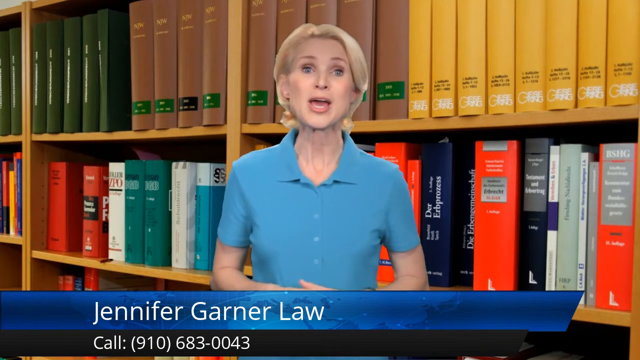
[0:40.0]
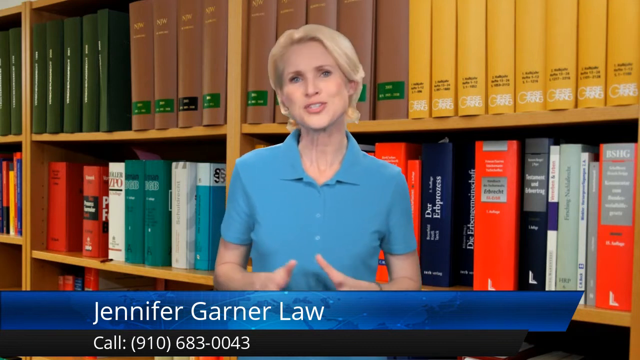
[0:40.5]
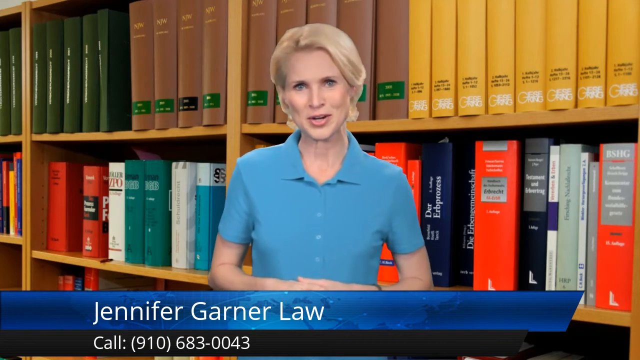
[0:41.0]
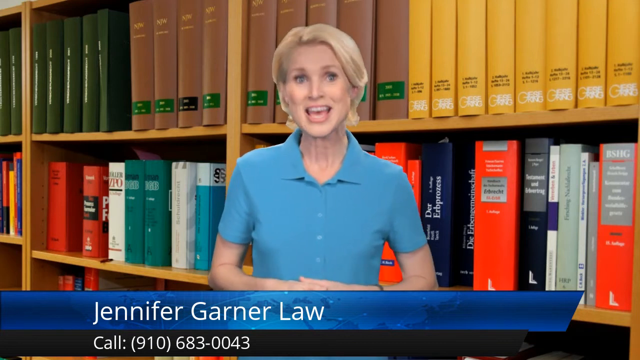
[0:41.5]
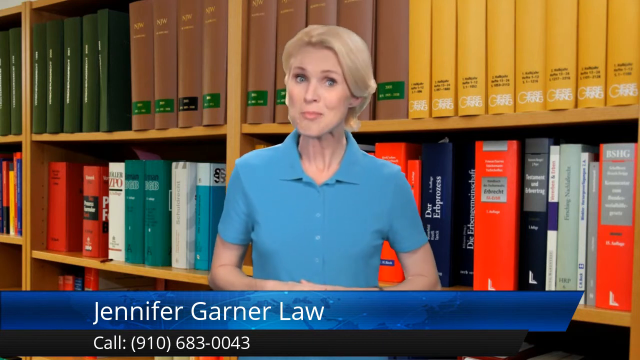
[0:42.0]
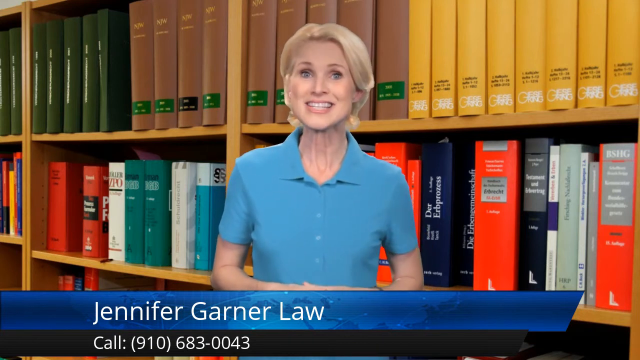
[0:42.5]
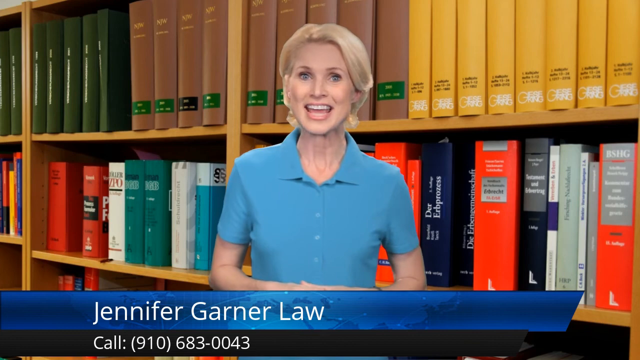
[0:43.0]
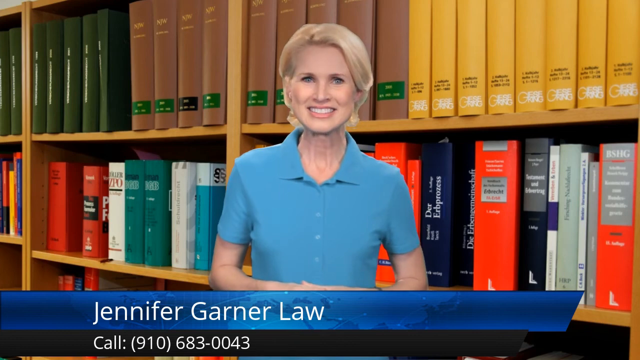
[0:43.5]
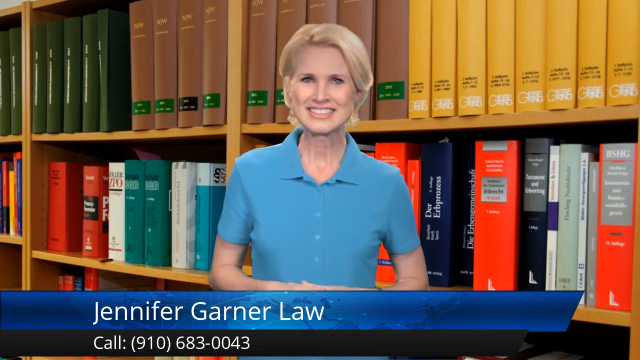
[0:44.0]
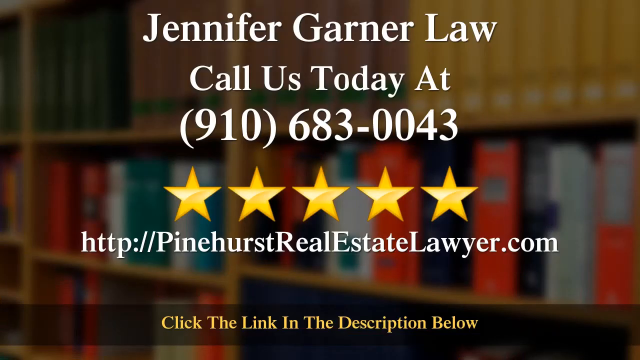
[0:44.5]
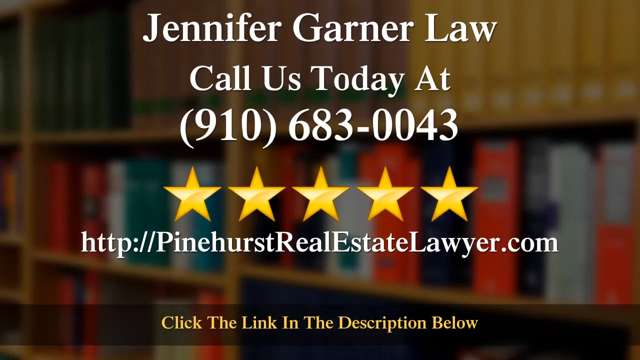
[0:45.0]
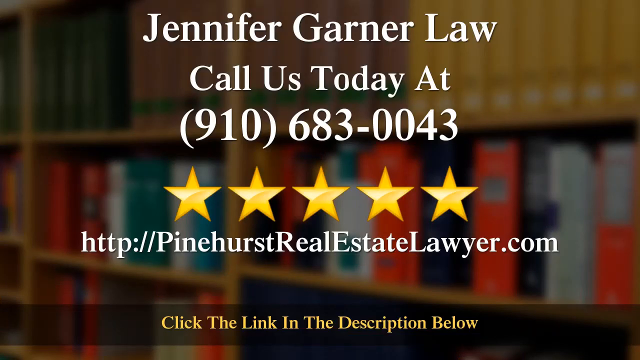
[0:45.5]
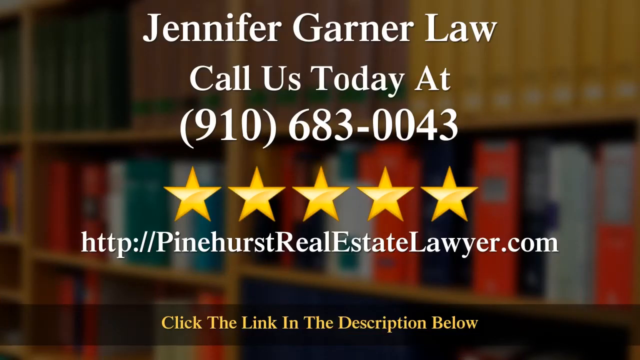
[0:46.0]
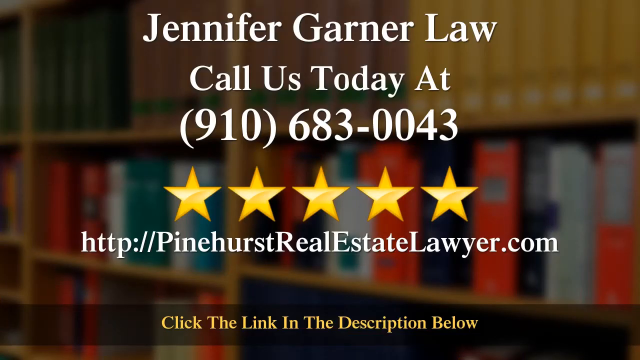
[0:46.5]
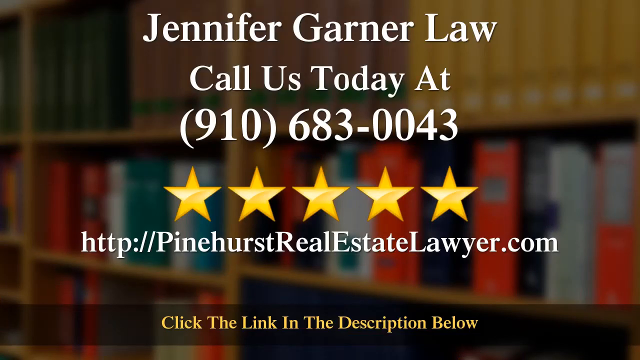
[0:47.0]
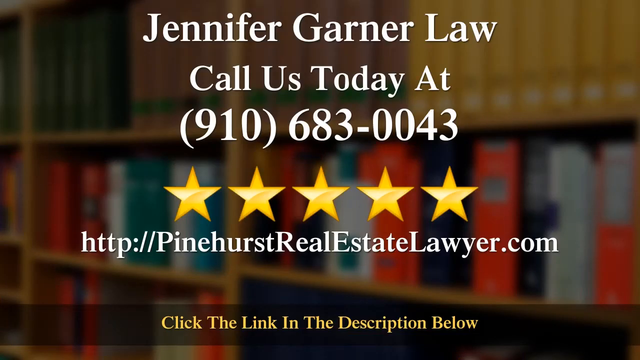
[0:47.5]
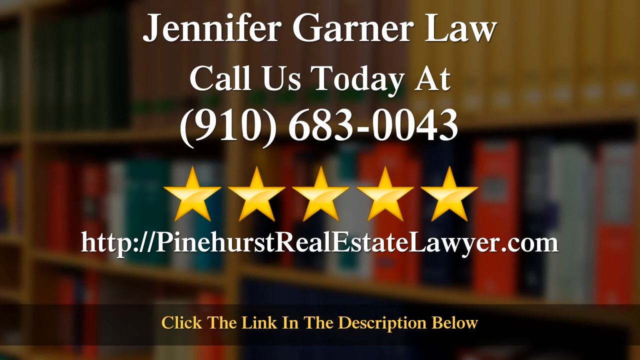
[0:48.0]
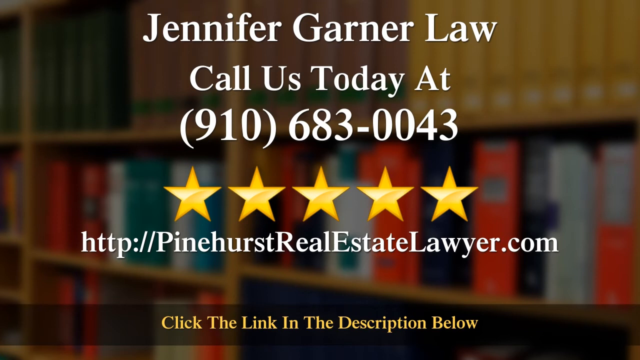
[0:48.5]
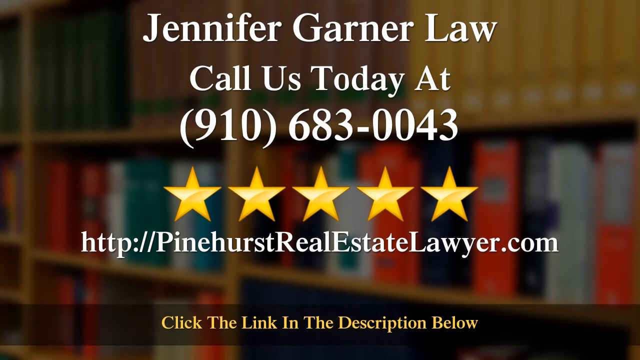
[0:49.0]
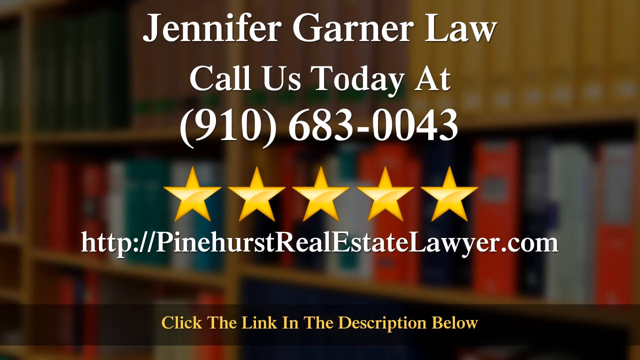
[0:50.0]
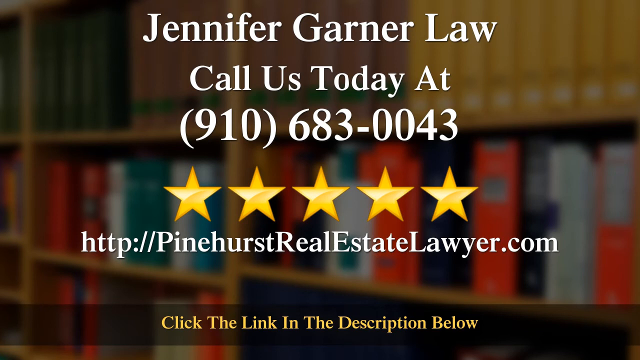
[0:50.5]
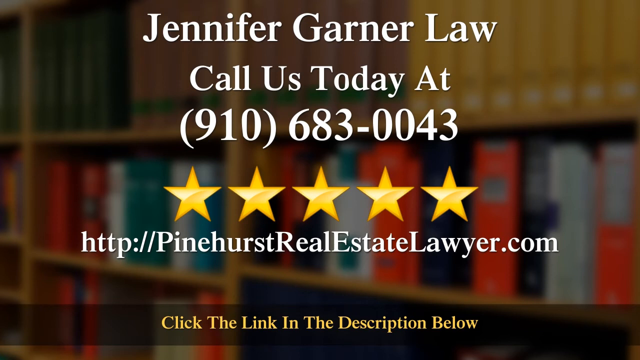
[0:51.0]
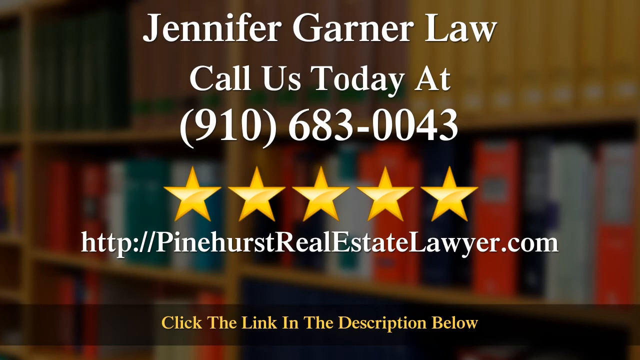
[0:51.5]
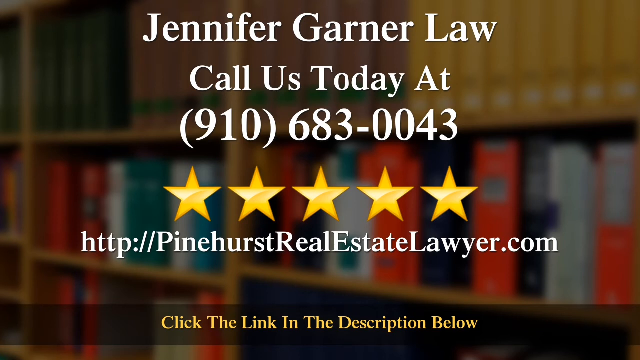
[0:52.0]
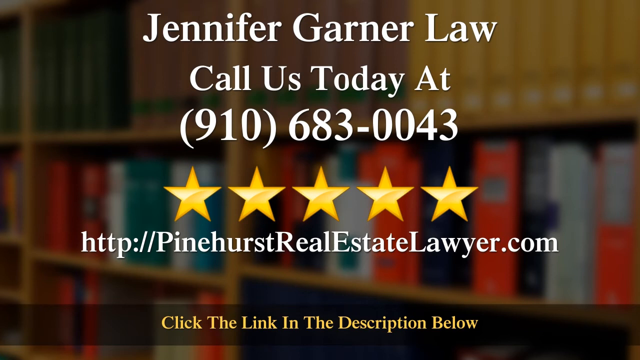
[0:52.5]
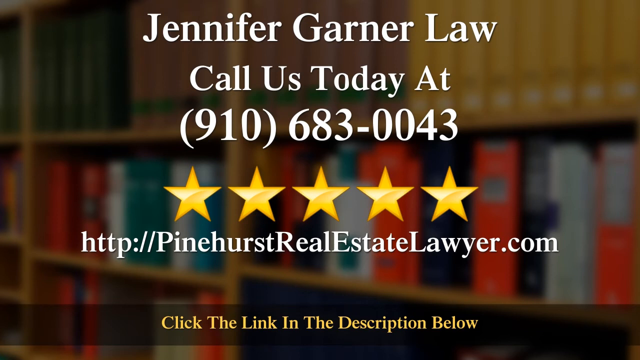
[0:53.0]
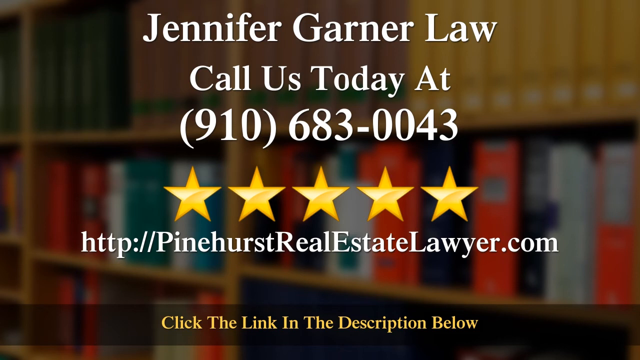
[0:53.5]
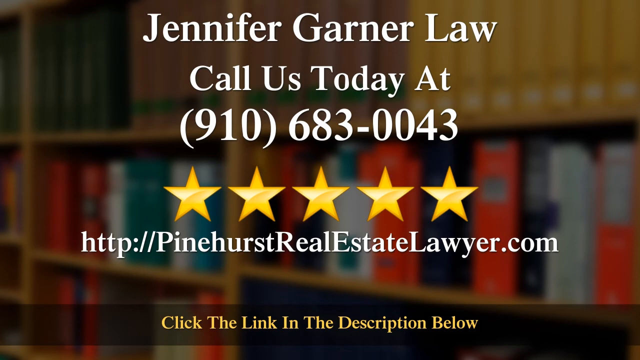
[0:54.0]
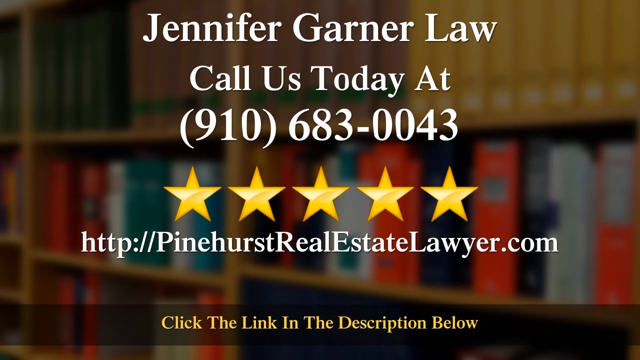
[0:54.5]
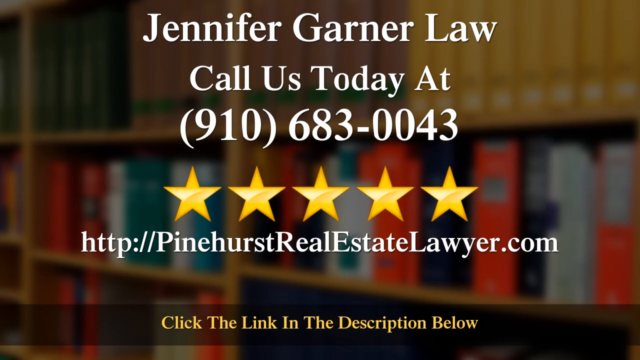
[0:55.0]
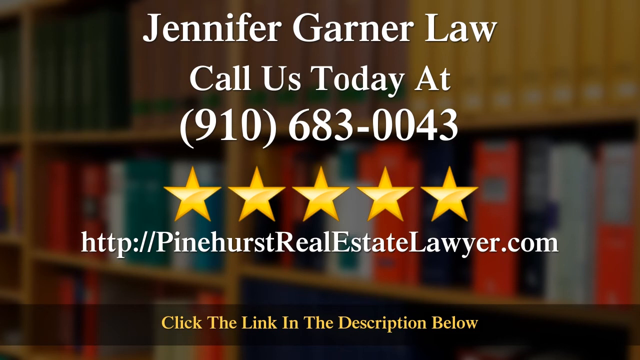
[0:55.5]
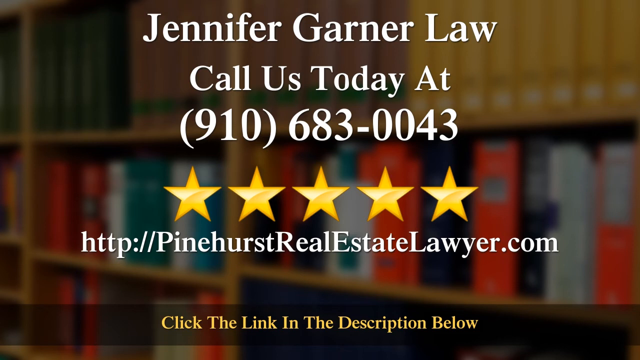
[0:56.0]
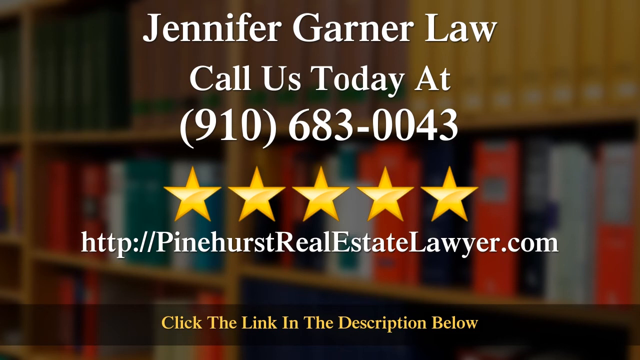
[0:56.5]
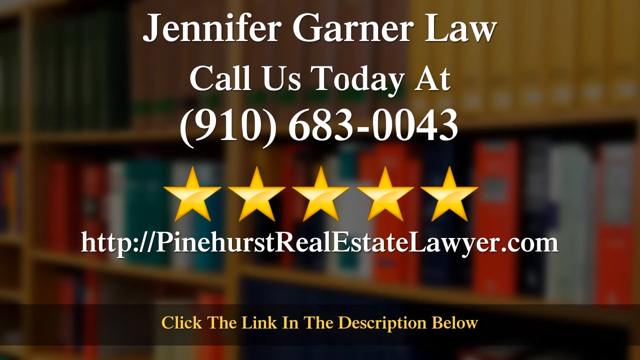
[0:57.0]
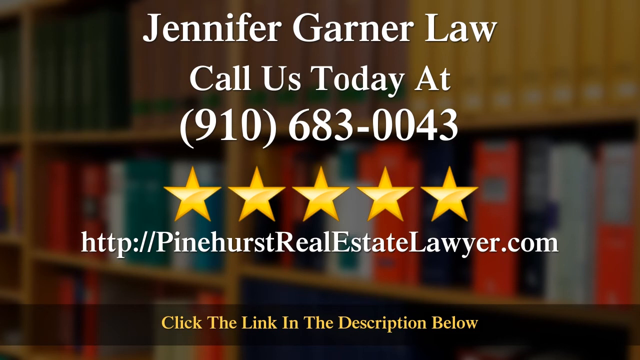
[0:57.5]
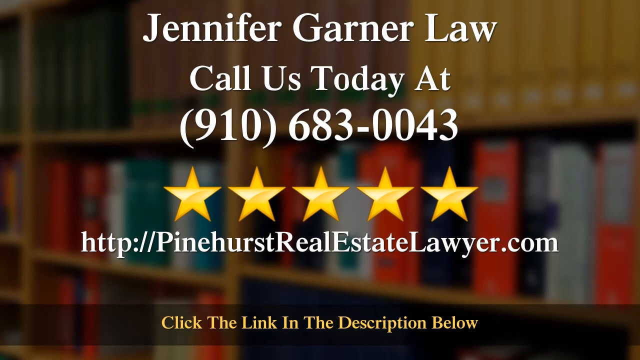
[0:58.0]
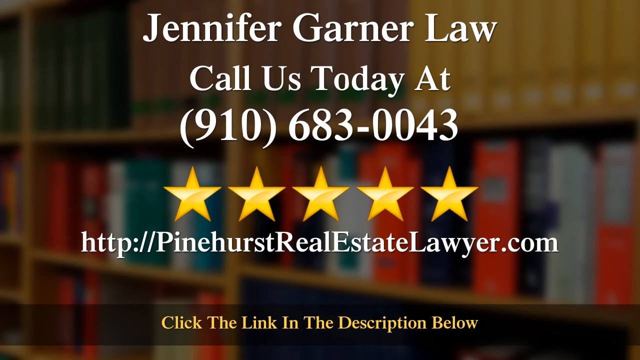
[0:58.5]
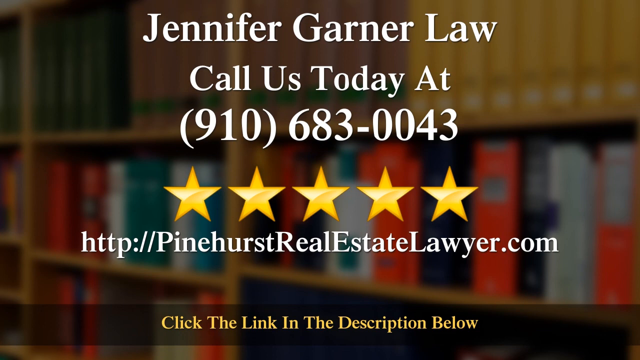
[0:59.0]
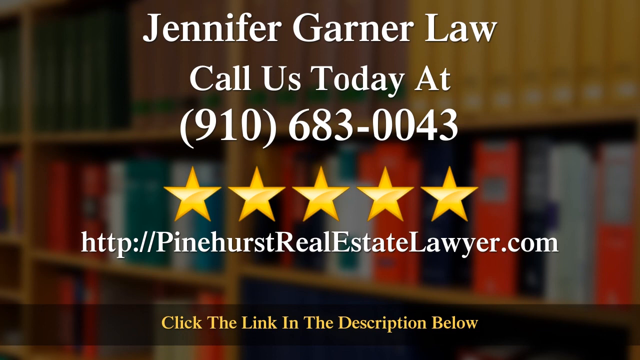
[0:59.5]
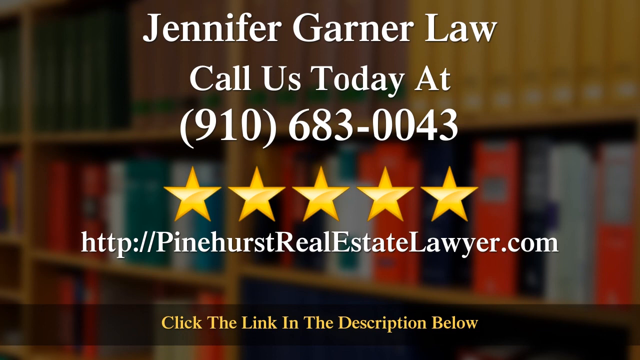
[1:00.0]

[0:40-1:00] The woman continues speaking towards the camera until she disappears and is replaced by text reading "Jennifer Garner Law" and "call us today at 910-683-0043." Below the number is a graphic of five gold stars, below the stars the URL "http://pinehurstrealestatelawyer.com," and below that the text "click the link in the description below." The image of the bookcase full of books is still visible in the background. The books are of various colors: yellow, brown and green books on the top shelf, and orange, white, blue, black and green books on the middle shelf. Another shelf below the middle one is not very visible, but it is still filled with books.